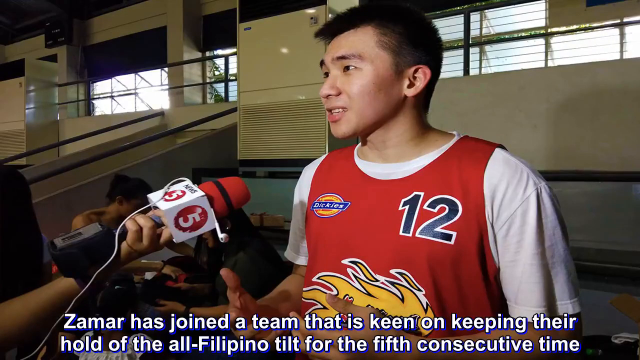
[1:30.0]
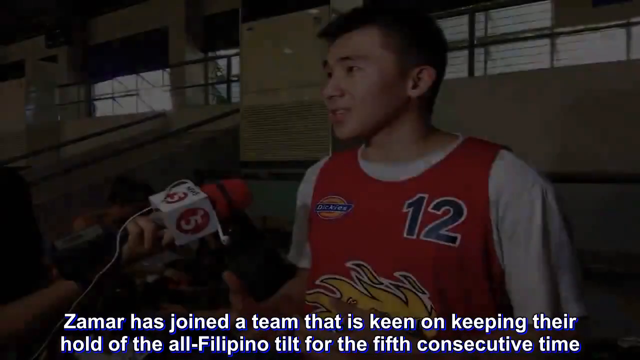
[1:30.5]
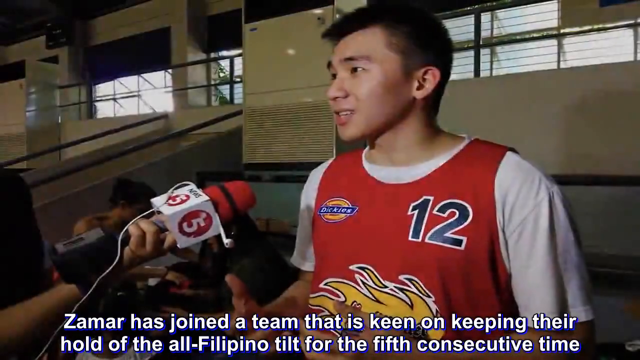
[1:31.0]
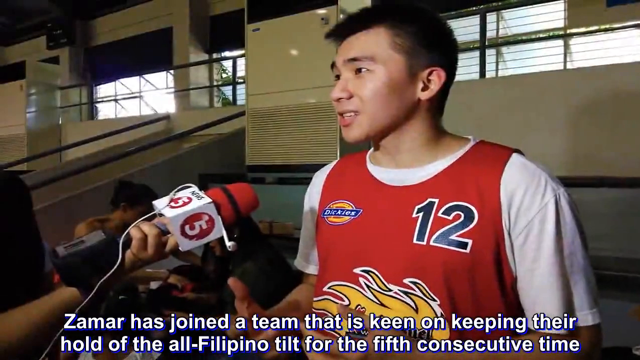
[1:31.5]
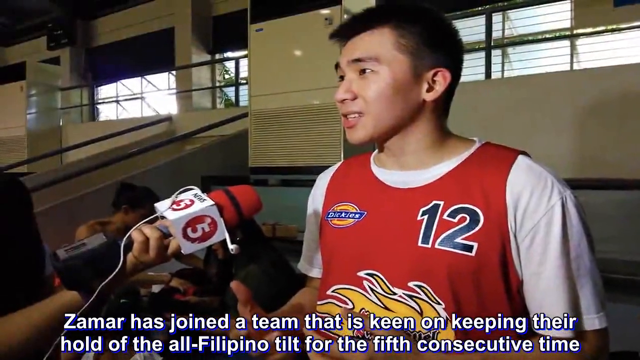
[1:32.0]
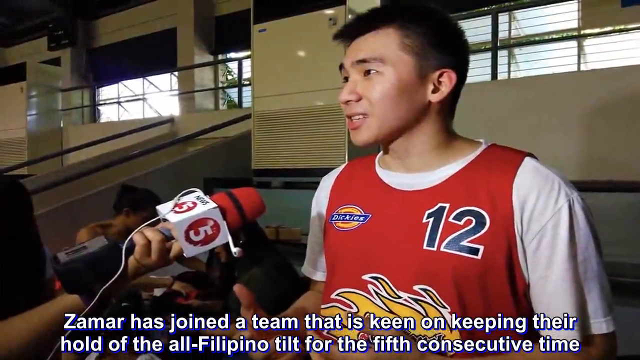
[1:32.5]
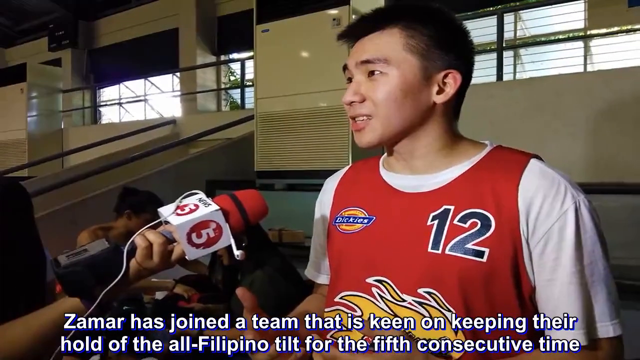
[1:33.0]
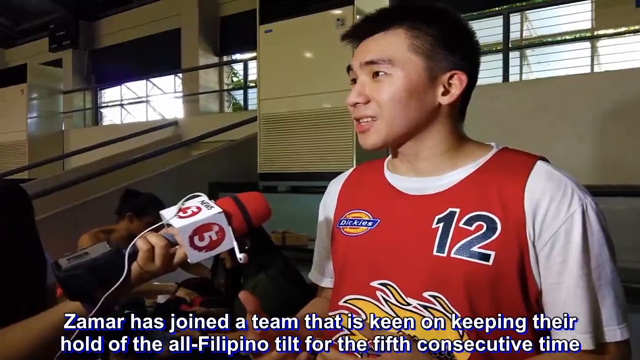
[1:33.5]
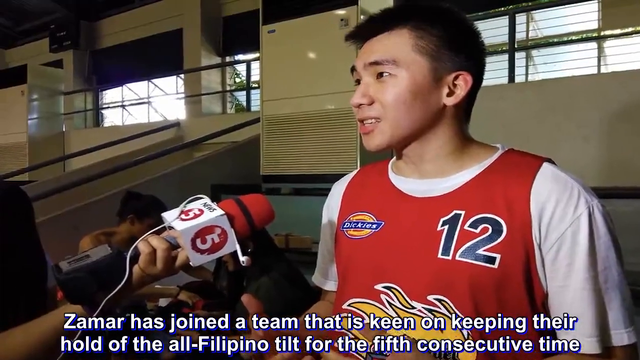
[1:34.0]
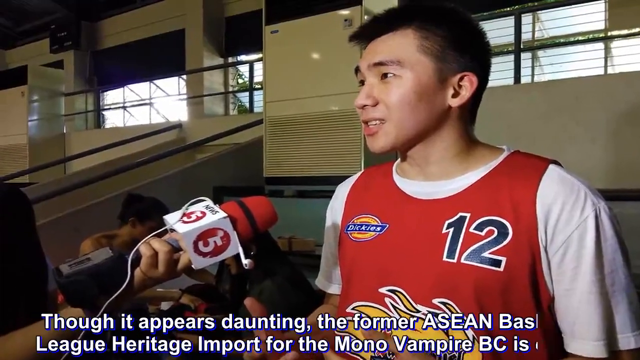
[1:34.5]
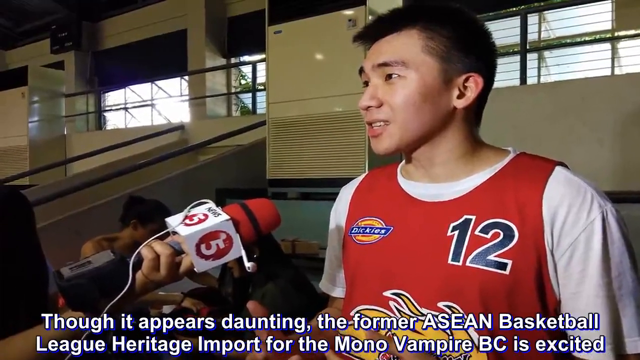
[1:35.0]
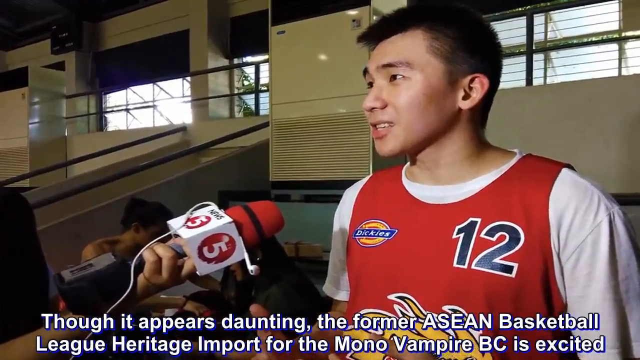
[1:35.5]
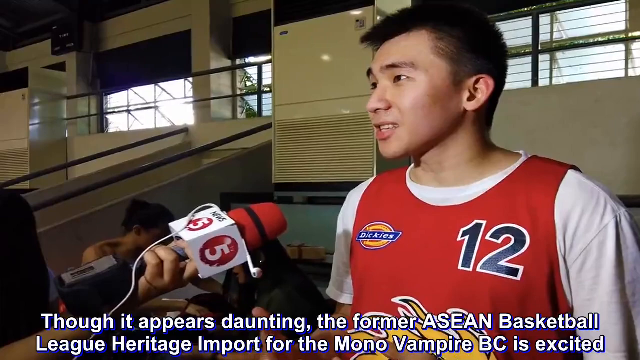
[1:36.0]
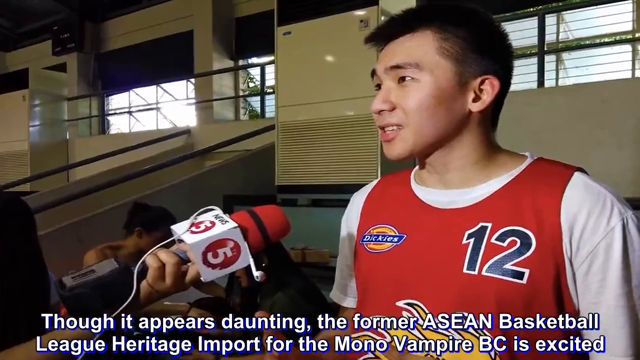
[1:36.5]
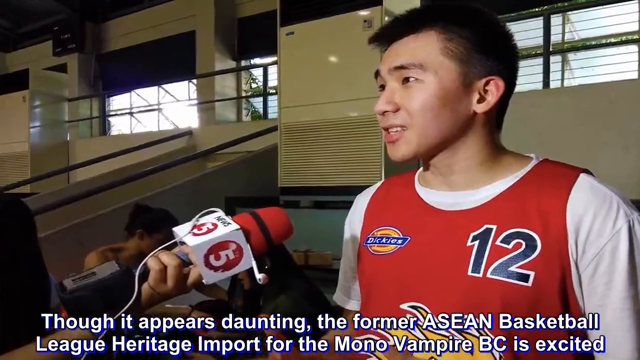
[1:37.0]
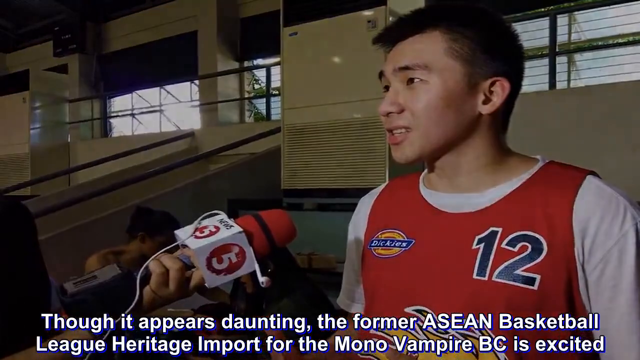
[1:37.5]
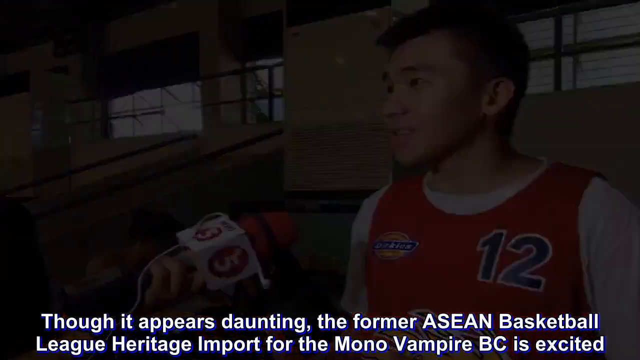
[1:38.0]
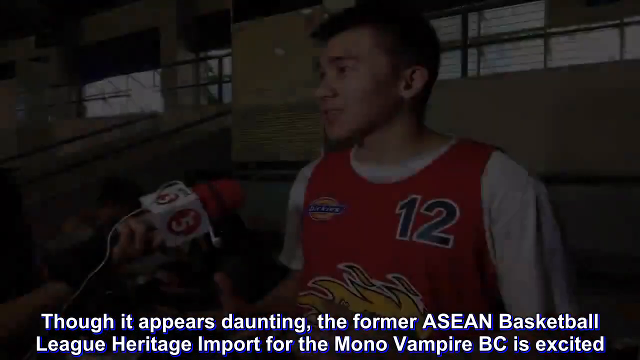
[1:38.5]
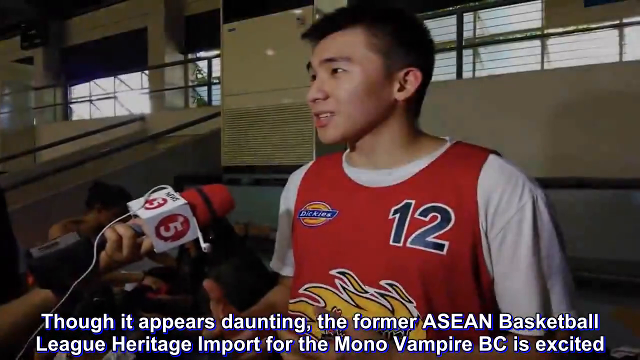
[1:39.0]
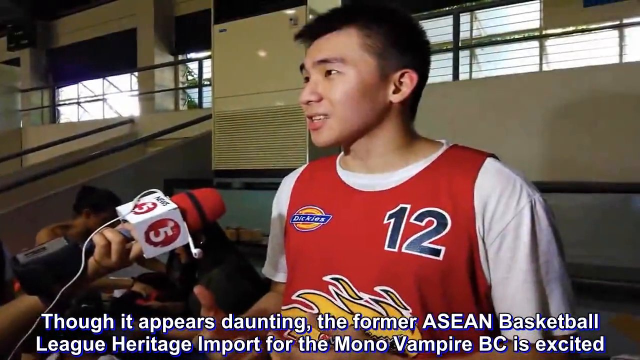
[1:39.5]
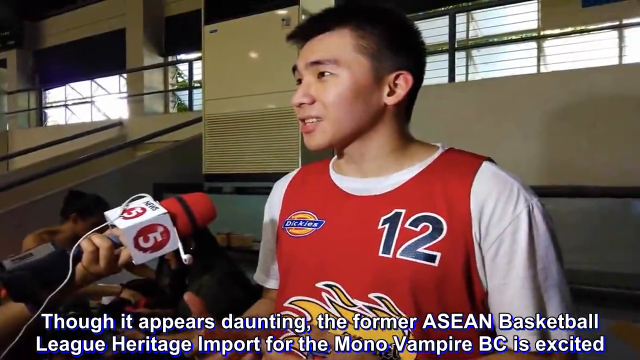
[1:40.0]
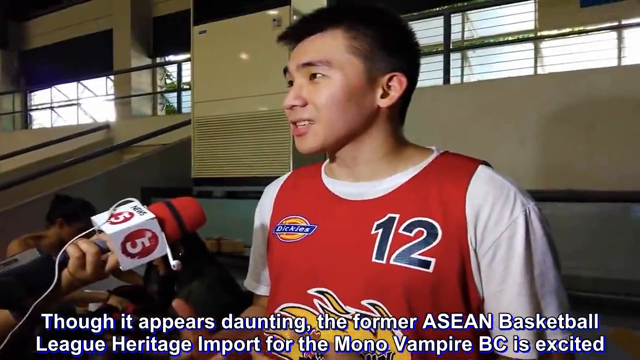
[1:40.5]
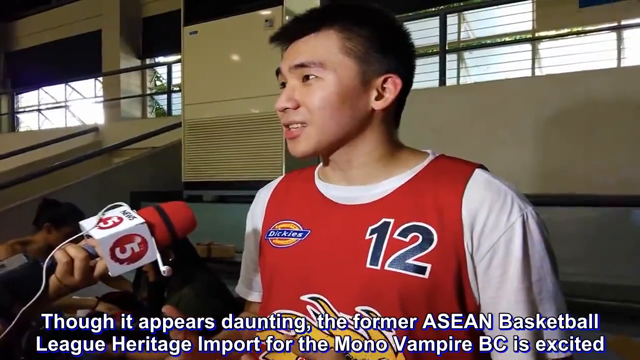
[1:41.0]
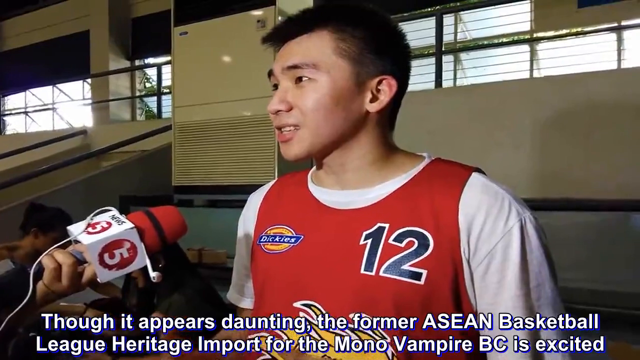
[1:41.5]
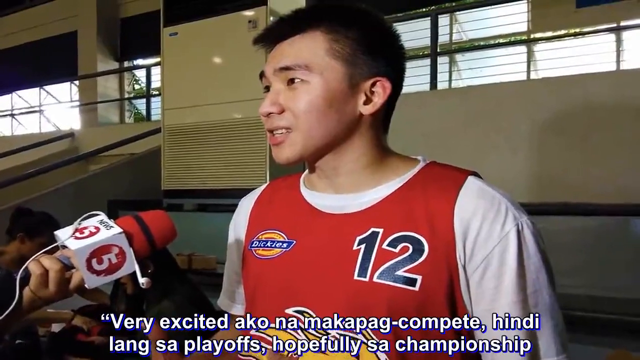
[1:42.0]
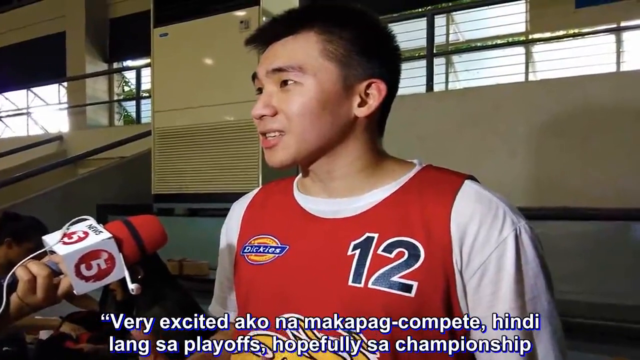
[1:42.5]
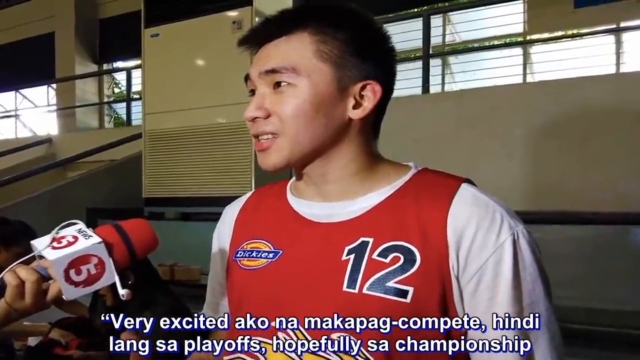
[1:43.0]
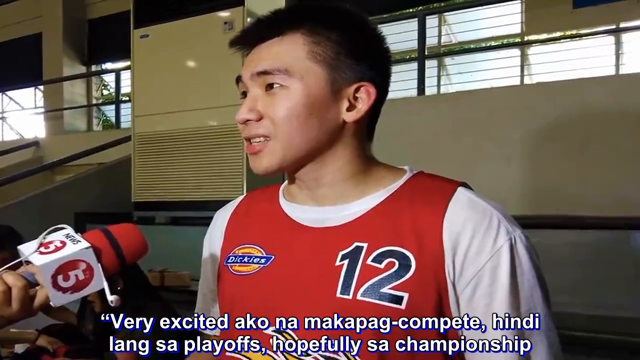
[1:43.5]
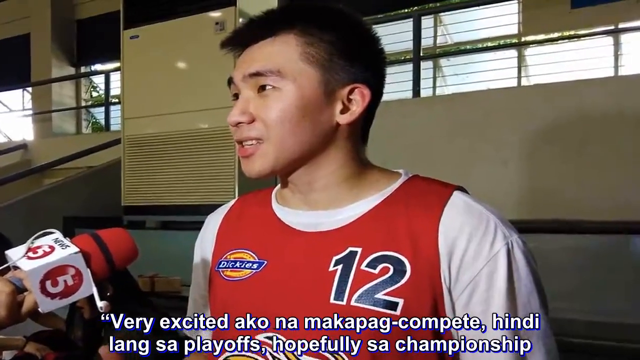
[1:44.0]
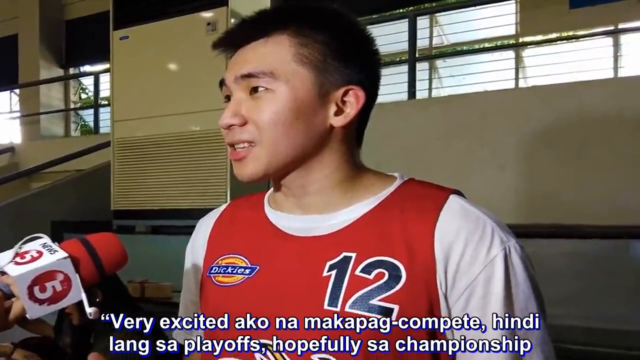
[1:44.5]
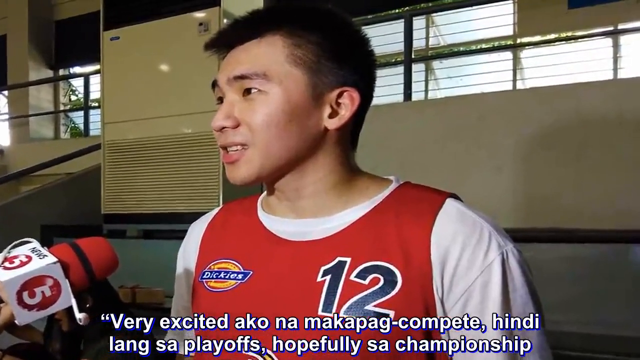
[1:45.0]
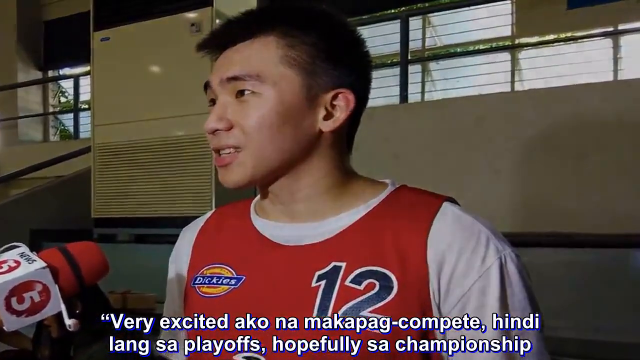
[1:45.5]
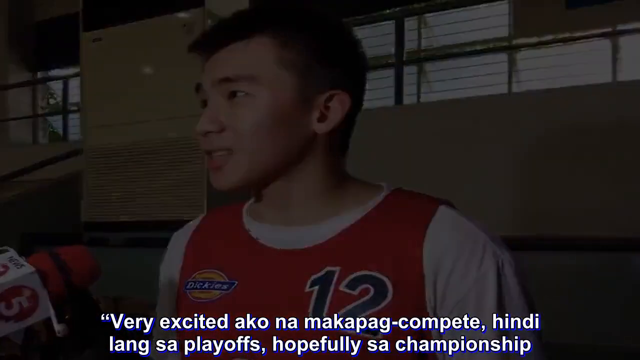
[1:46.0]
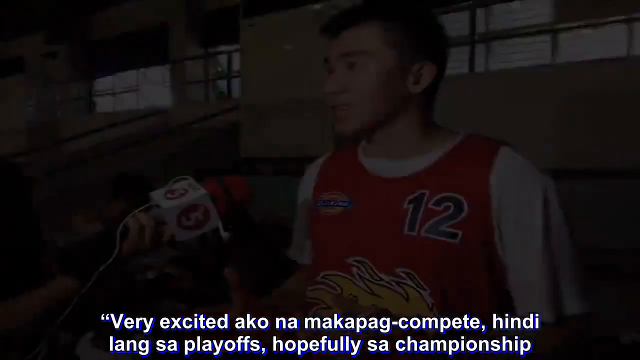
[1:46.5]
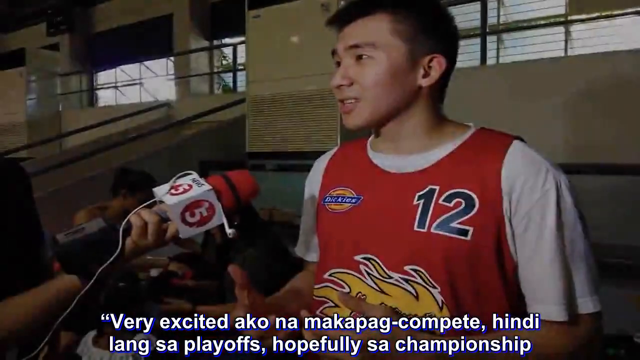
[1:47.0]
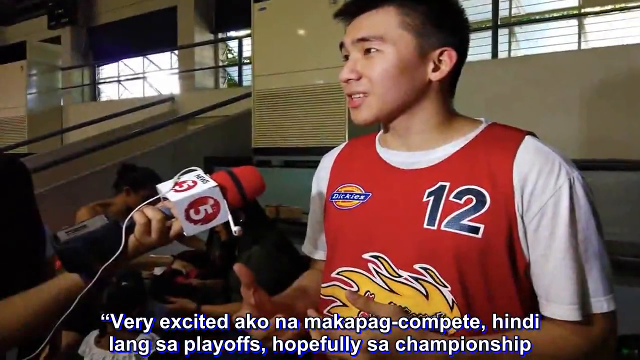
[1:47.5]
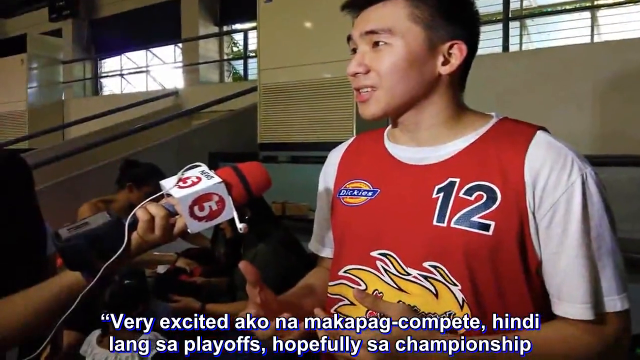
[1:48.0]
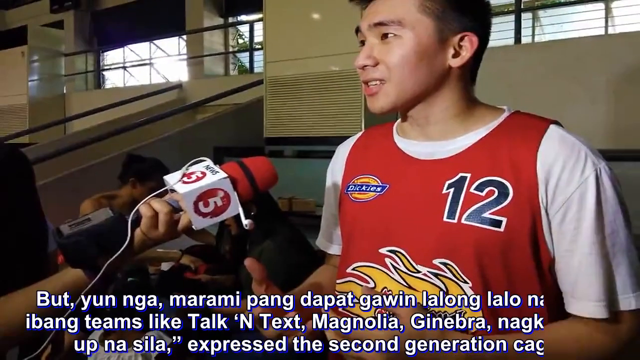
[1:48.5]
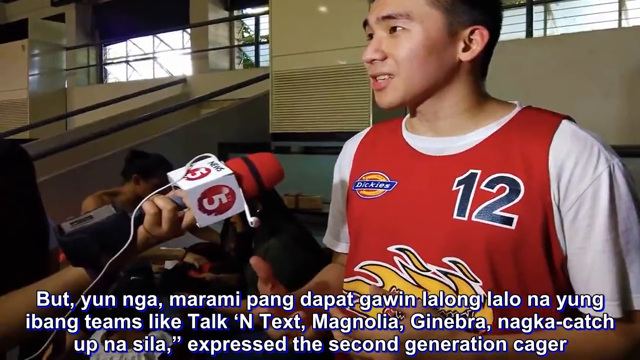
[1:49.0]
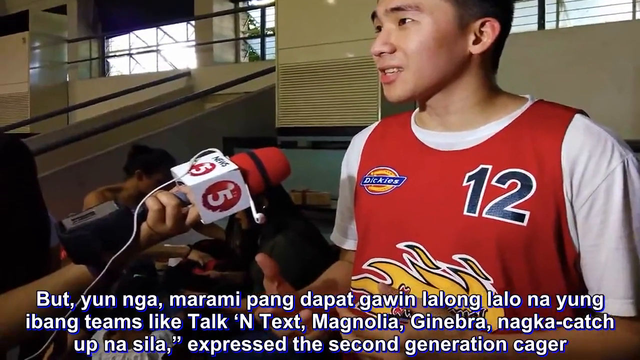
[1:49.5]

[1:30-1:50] An Asian male with short black hair, clean shaven, looks to the left toward people off camera. He wears a red jersey with the number 12 in black with a white border at the top left near his chest, an oval-shaped Dickies sponsorship at the top right, and a sort of flame logo on the belly. At the bottom left, a woman's arm comes into view holding a microphone toward the man; the microphone appears to have the word "news" on it with the number five beneath it. The woman appears to have a little black square box attached to her wrist. Behind the microphone, two women of Asian descent with black hair appear to be sitting. The text at the bottom changes to English, reading "Zamar has joined a team that is keen on keeping their hold of the all Filipino tilt for the fifth consecutive time. Though it appears daunting, the former ASEAN Basketball League Heritage Imports". The scene switches with a small flash as the camera zooms in on the man's face.